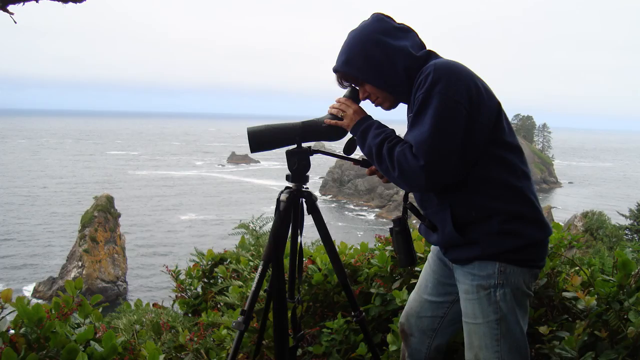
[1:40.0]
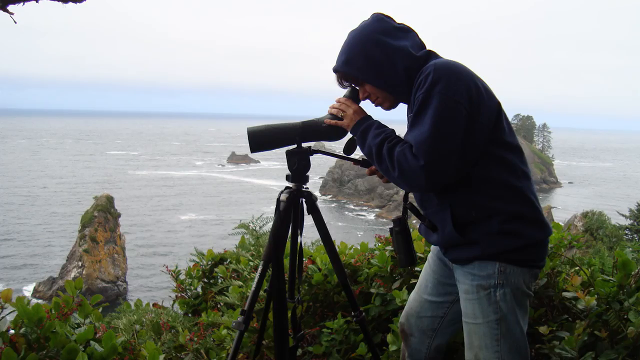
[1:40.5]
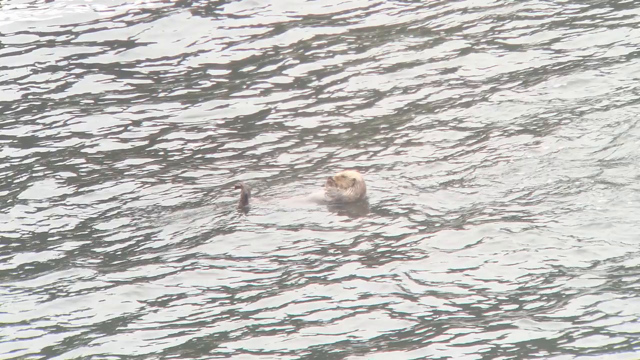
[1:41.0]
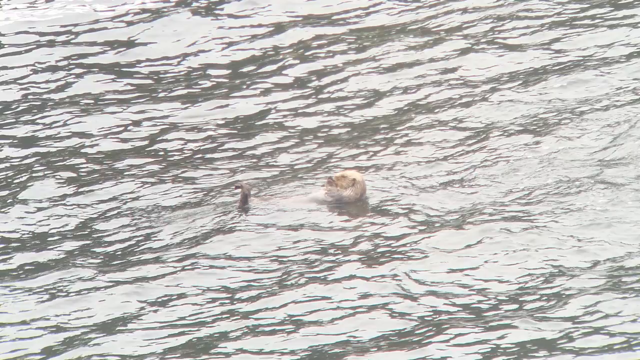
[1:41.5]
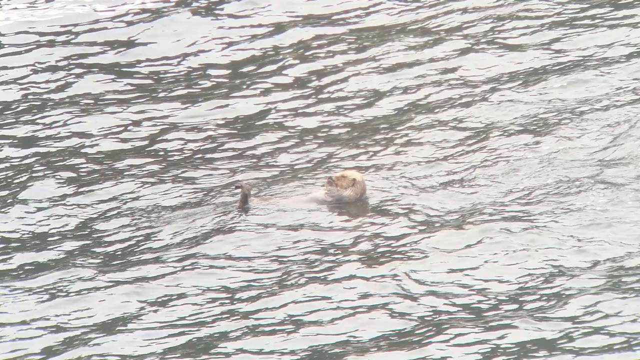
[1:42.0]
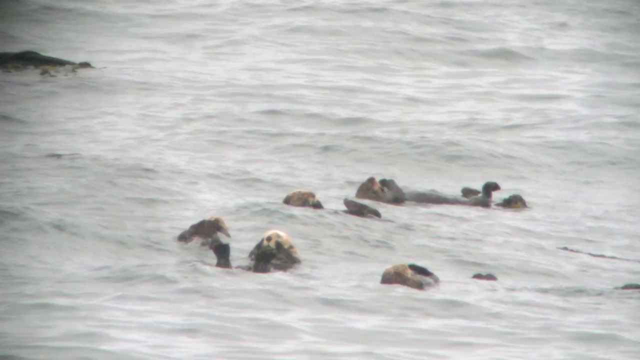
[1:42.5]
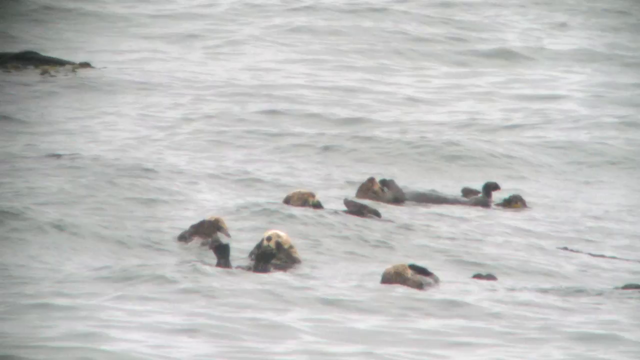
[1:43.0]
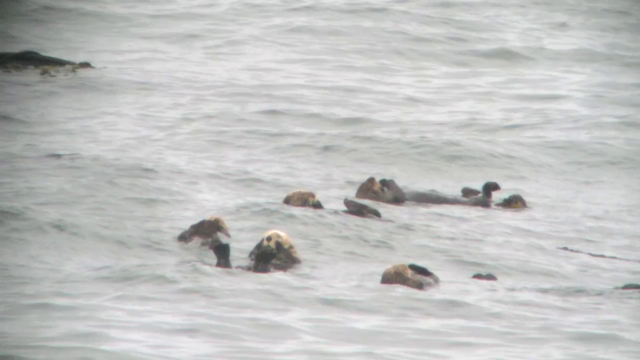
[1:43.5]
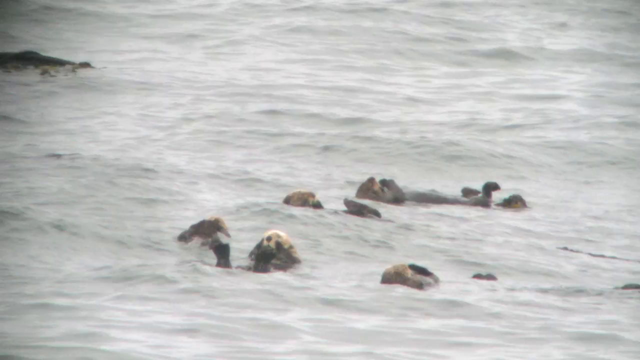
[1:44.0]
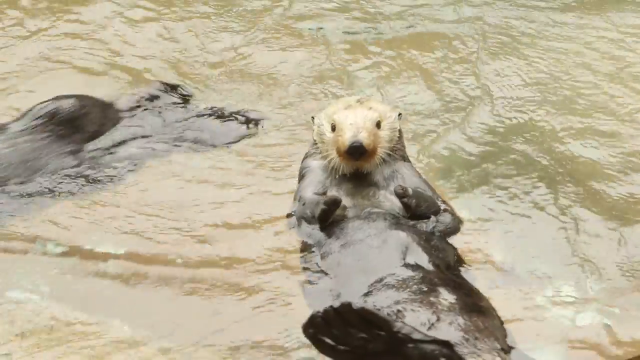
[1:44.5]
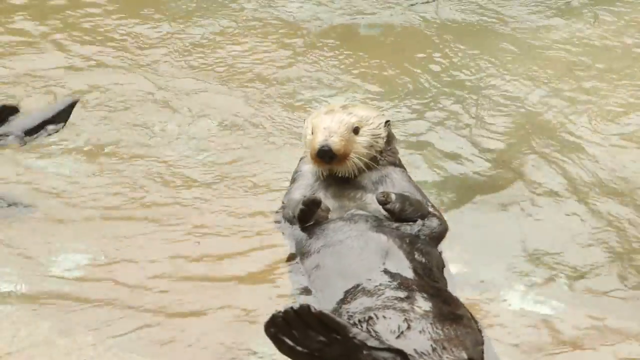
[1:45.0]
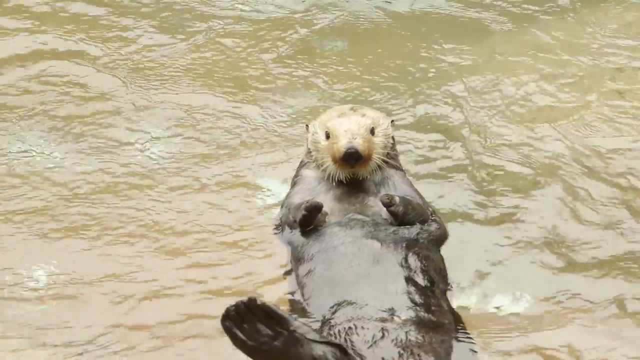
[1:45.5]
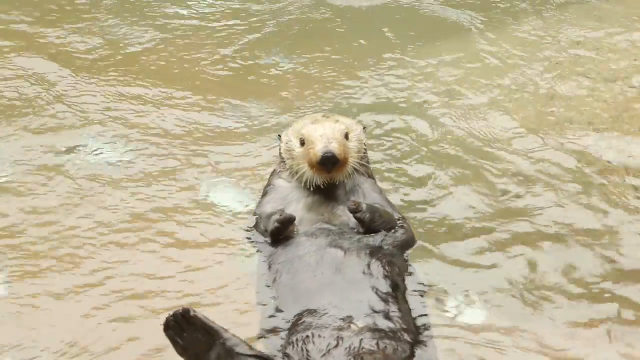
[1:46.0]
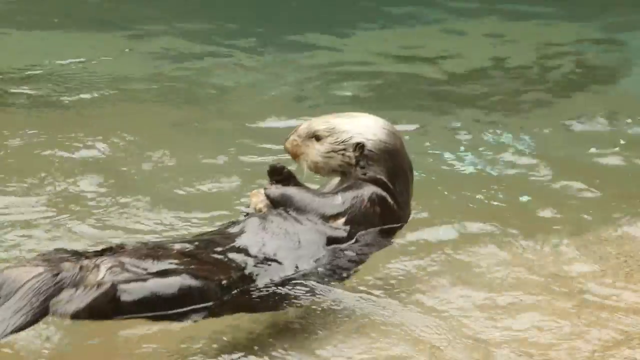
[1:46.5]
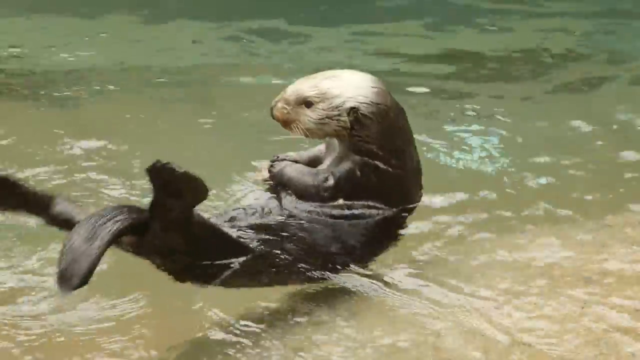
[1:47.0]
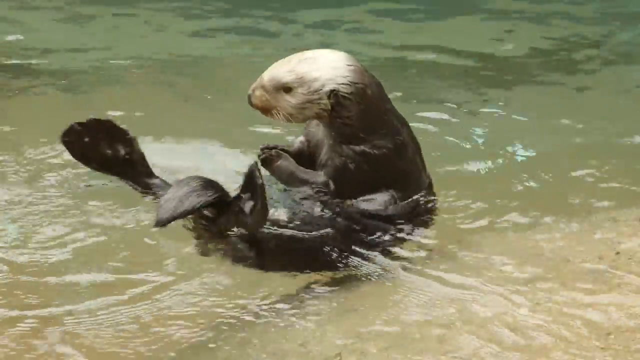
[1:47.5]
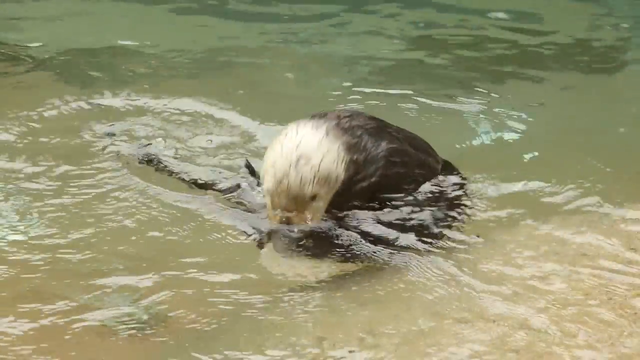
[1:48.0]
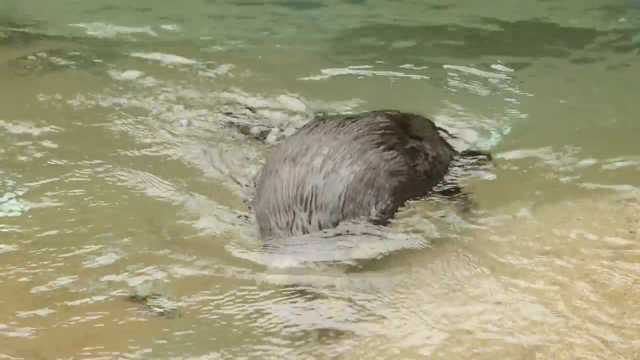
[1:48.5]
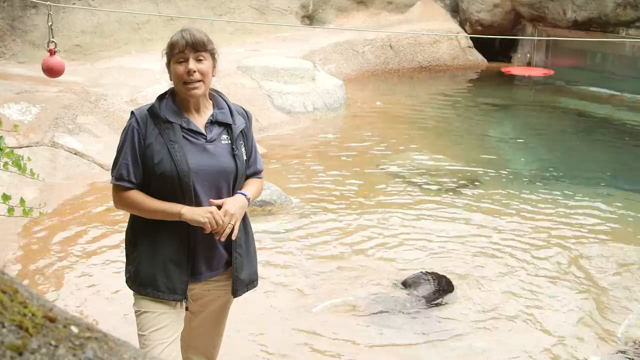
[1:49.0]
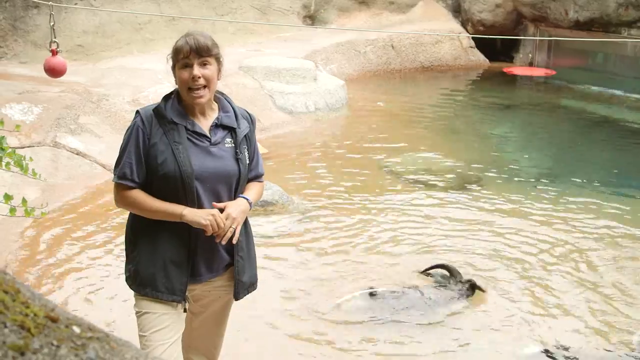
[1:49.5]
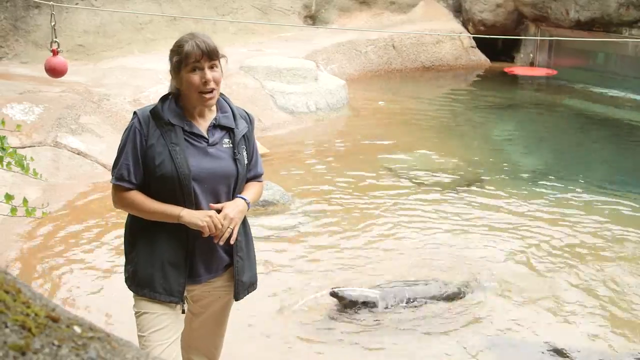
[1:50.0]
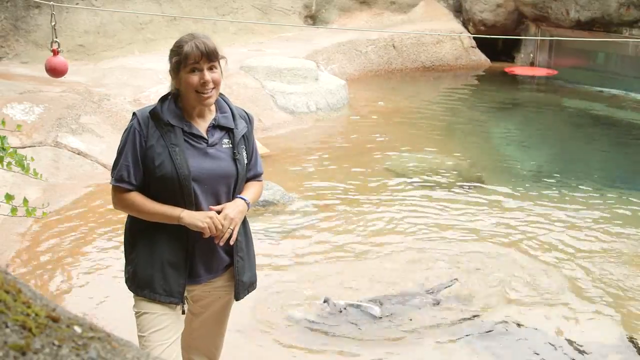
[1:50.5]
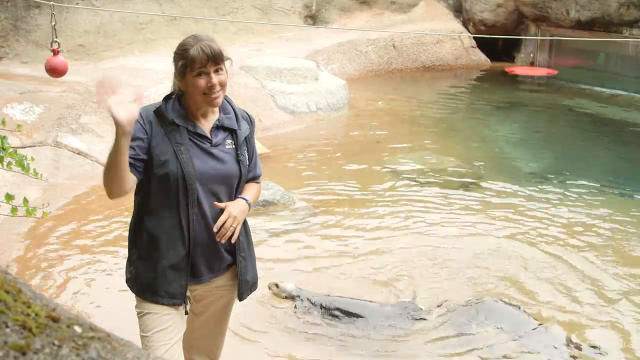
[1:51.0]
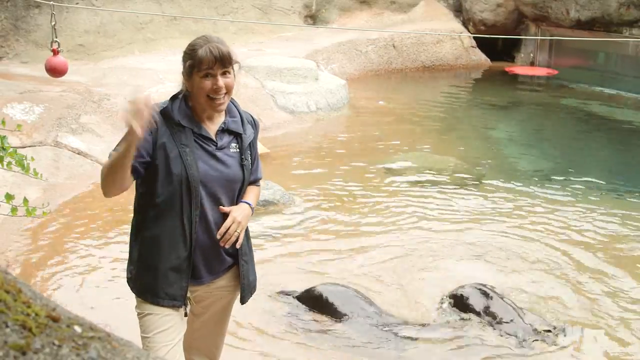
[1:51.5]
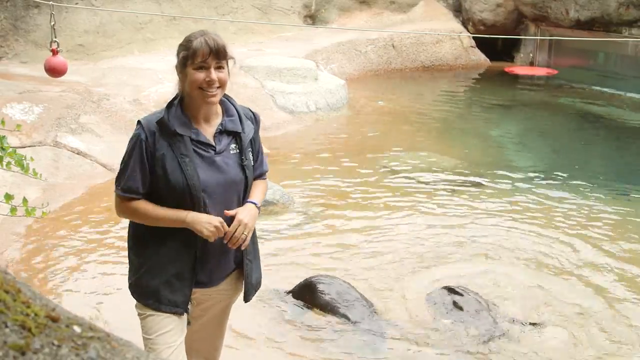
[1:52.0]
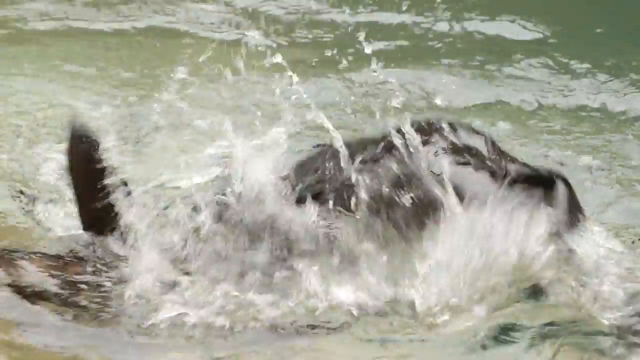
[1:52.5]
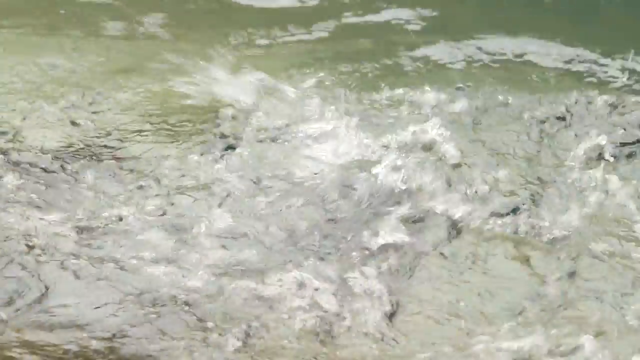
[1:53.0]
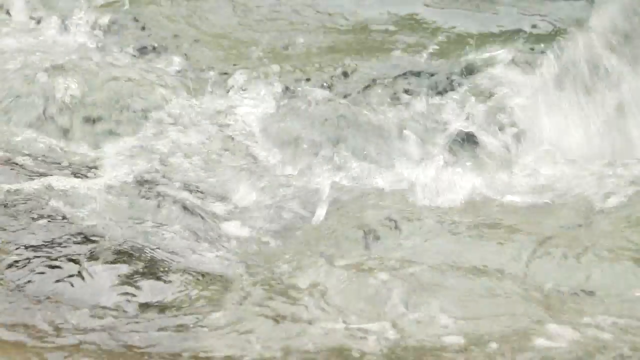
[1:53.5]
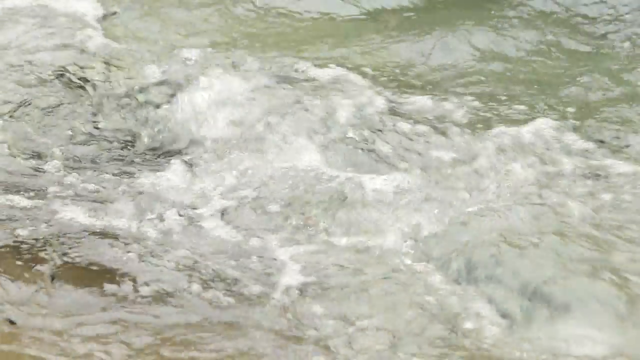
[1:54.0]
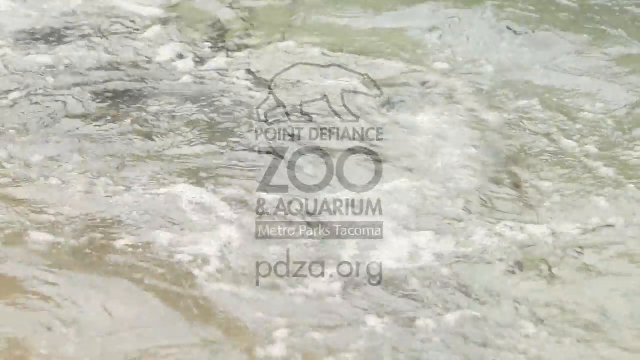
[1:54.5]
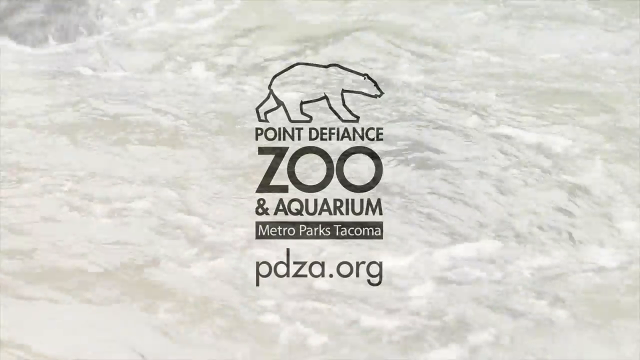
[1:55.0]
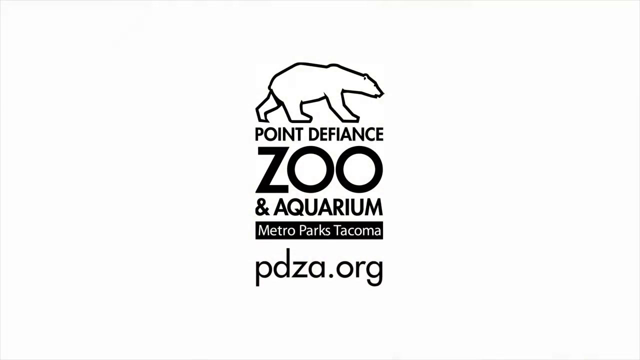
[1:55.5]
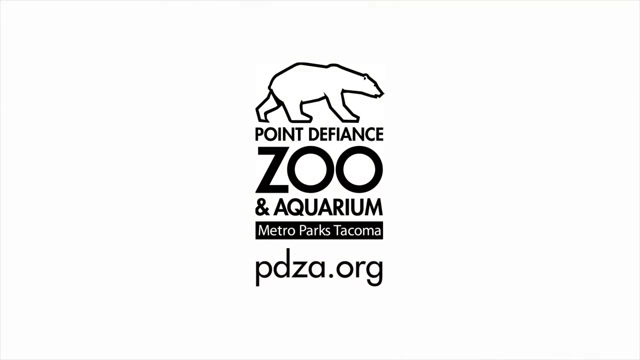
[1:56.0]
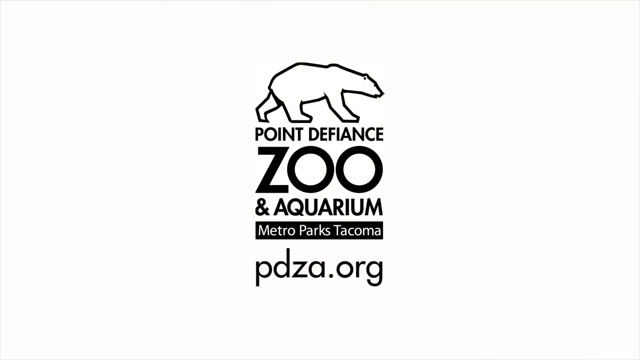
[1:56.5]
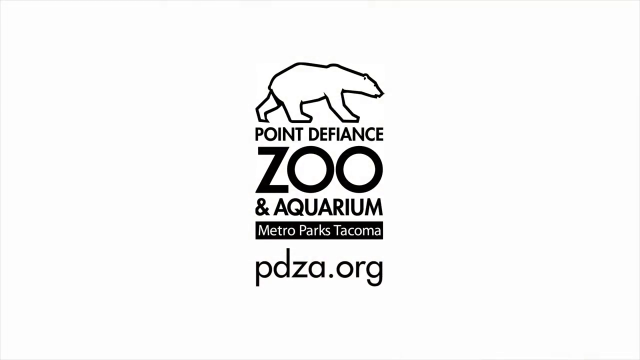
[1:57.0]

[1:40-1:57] A cameraman wears a black hood covering part of the face, and trousers. There is a camera and a binocular on a stand, and he looks through it, focusing on the other end of the water. A large expanse of ocean is visible with some rock in it, and there are some kids beside the man. He captures a distant otter swimming in the water, turning around and slapping its leg. The video ends by showing the name "Point Defiance Zoo and Aquarium Metro Park Tacoma" and the website "pbzl.org".